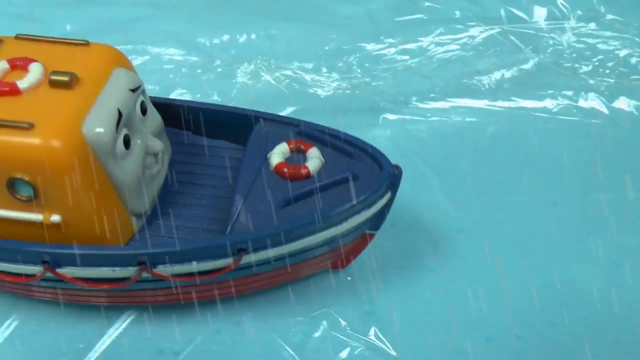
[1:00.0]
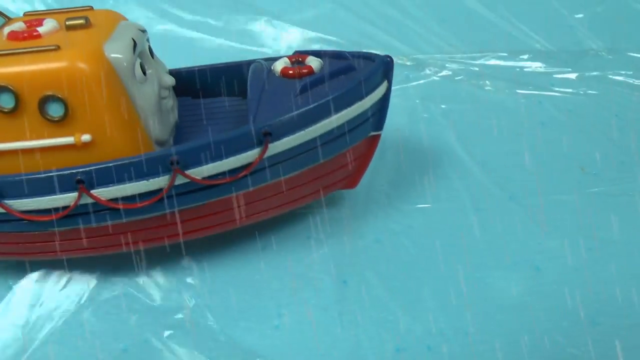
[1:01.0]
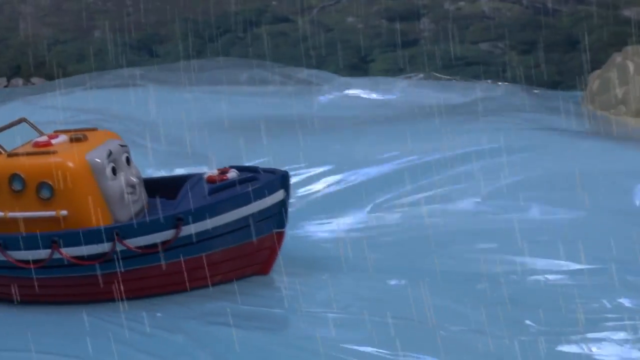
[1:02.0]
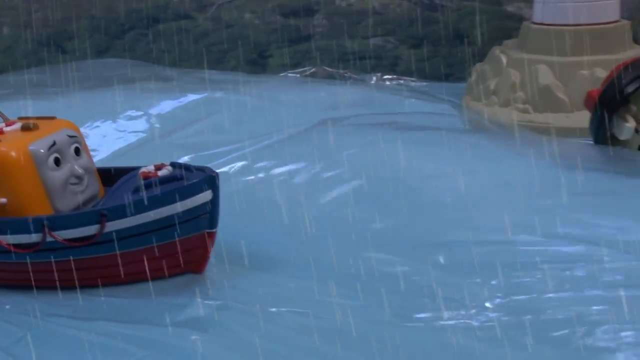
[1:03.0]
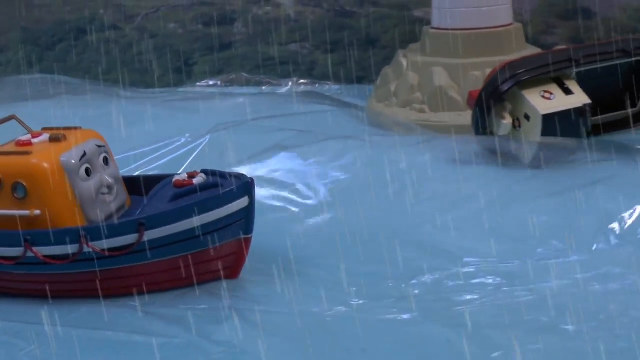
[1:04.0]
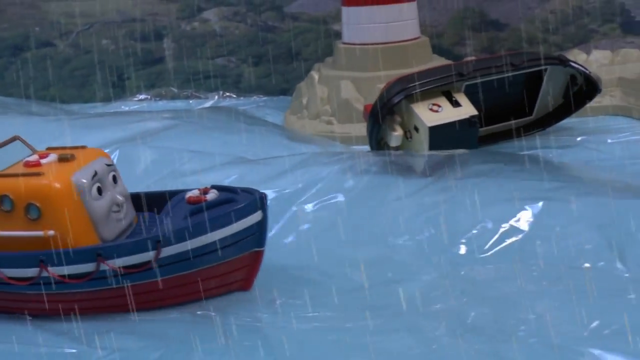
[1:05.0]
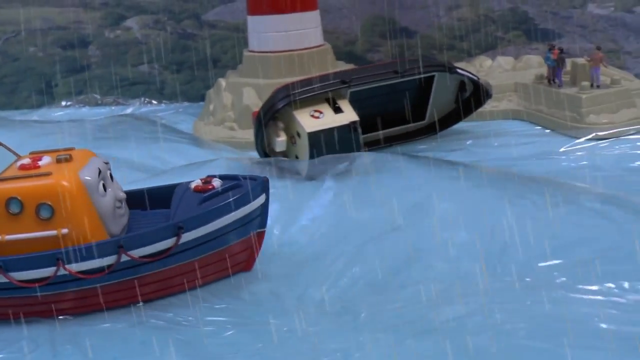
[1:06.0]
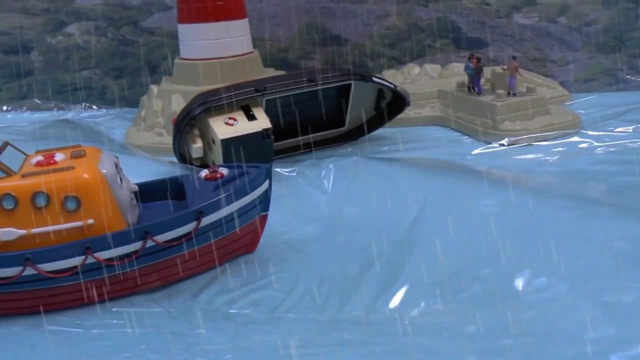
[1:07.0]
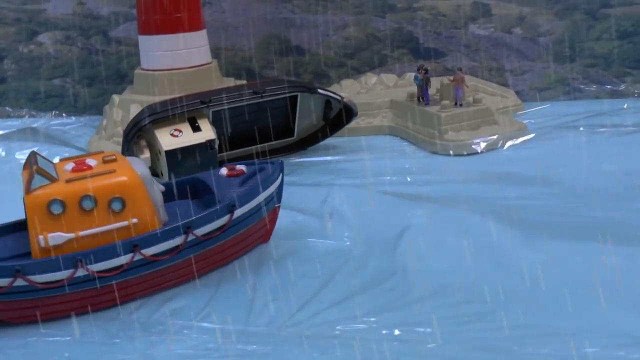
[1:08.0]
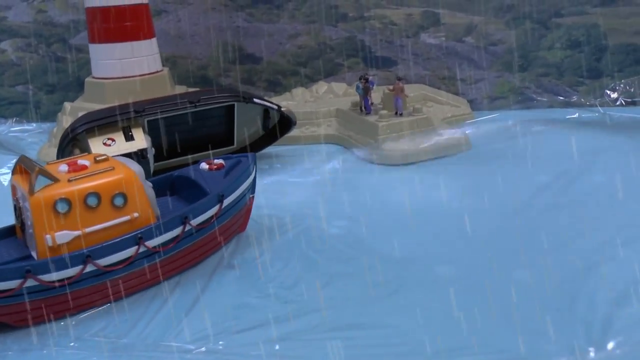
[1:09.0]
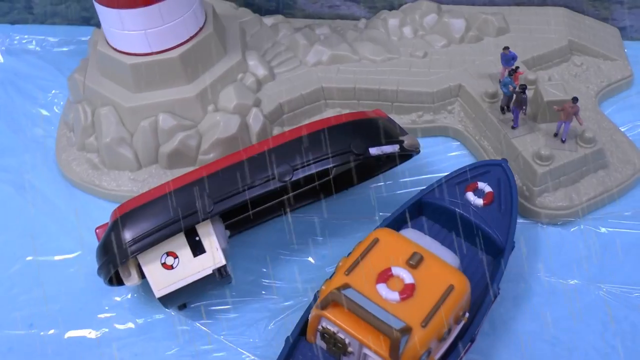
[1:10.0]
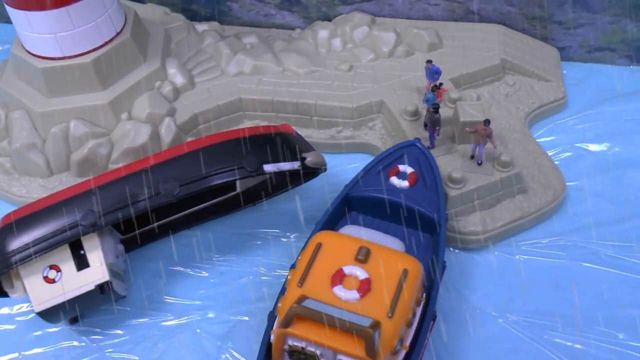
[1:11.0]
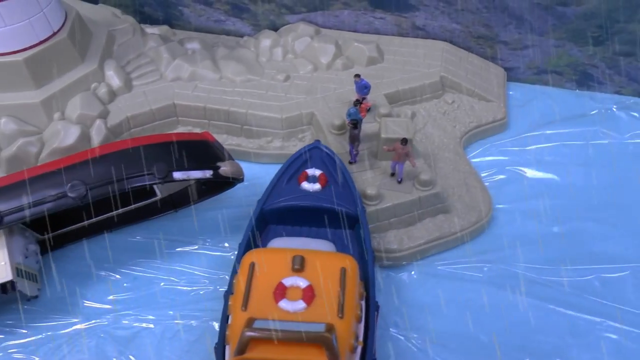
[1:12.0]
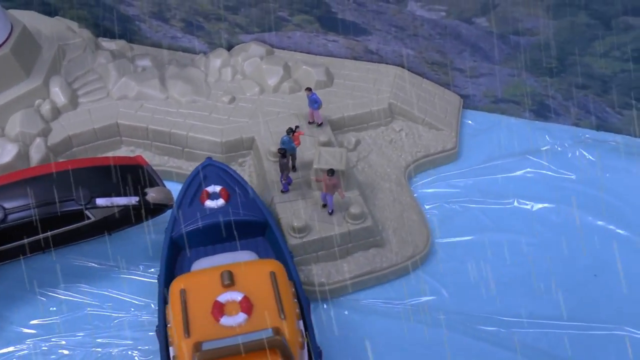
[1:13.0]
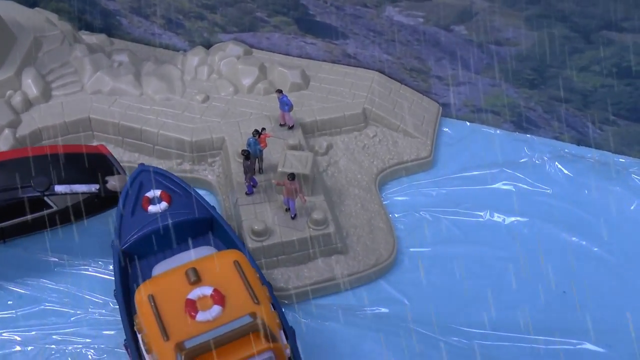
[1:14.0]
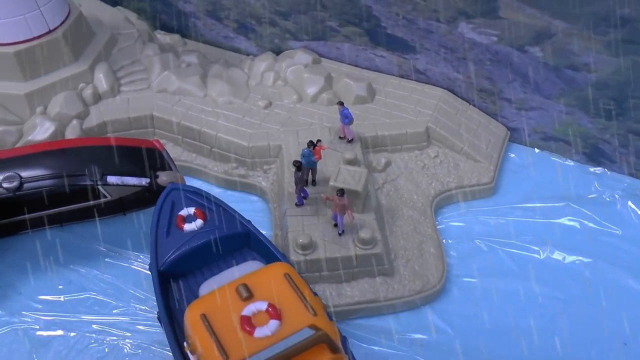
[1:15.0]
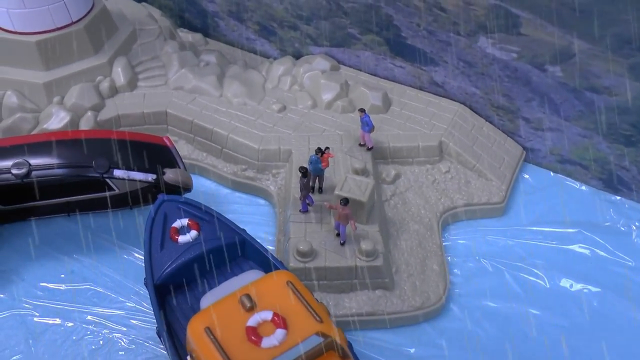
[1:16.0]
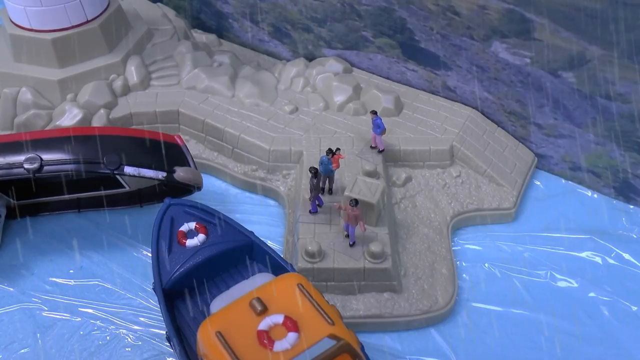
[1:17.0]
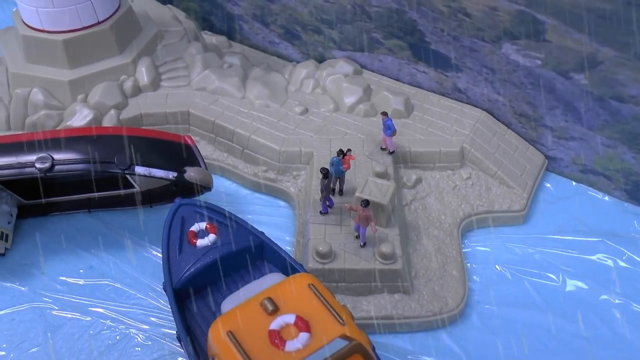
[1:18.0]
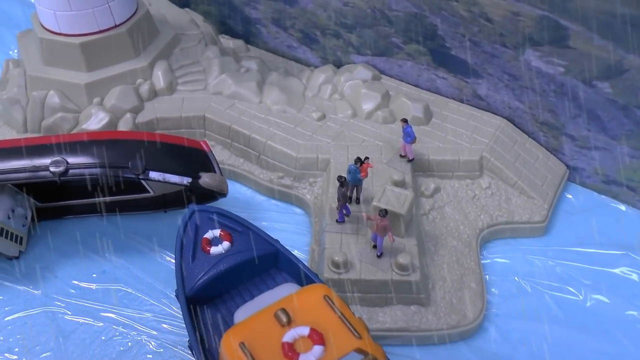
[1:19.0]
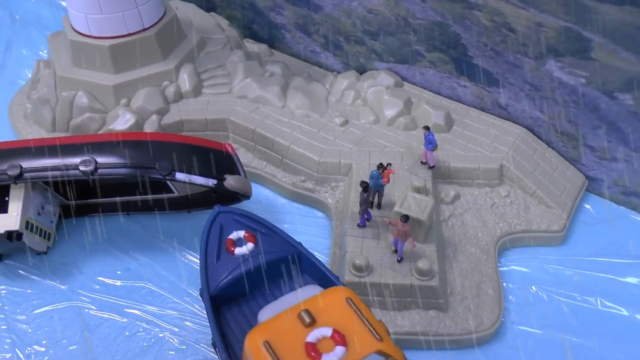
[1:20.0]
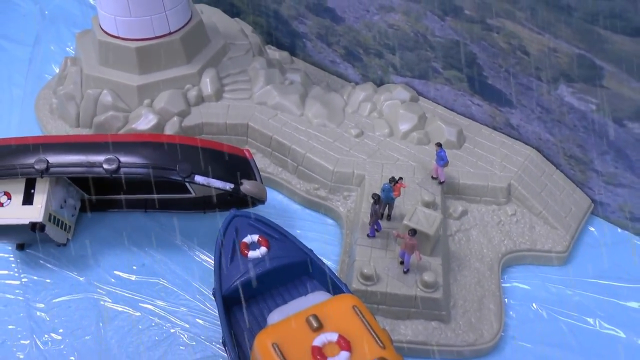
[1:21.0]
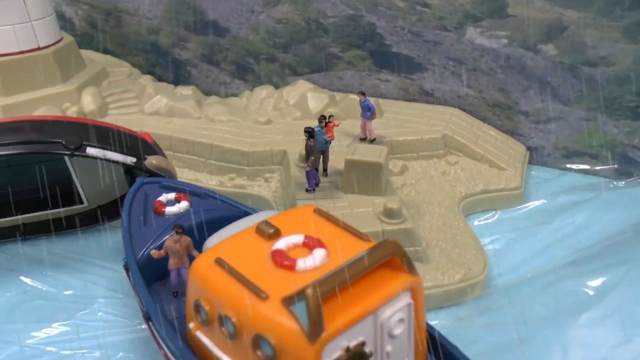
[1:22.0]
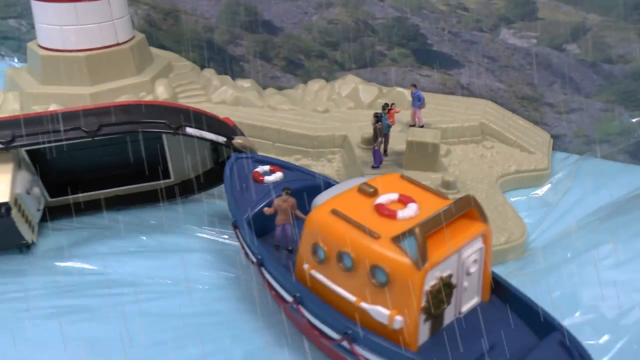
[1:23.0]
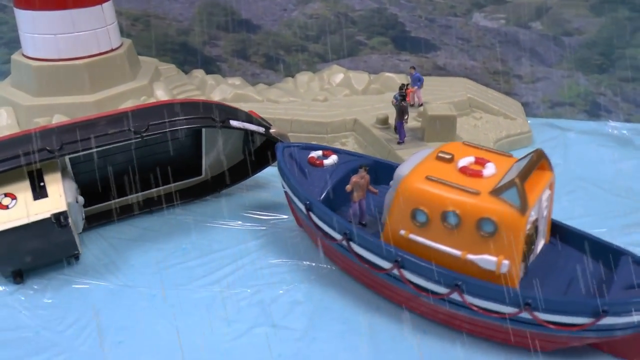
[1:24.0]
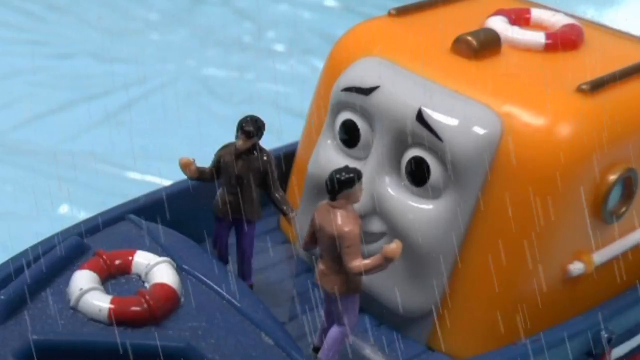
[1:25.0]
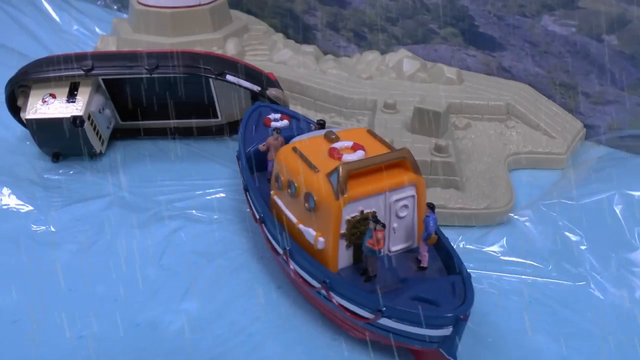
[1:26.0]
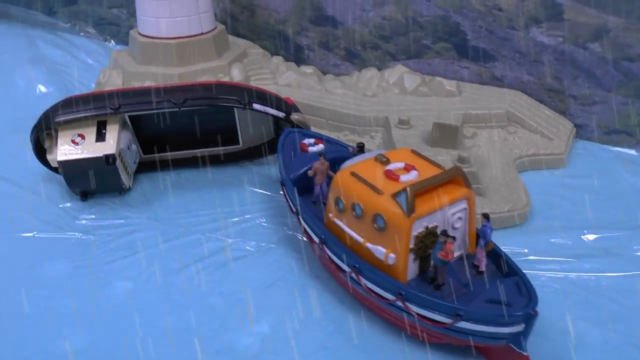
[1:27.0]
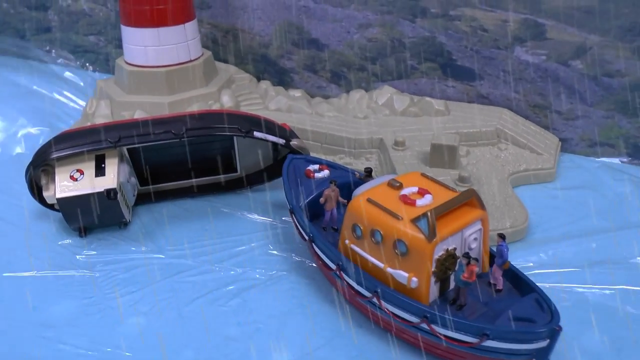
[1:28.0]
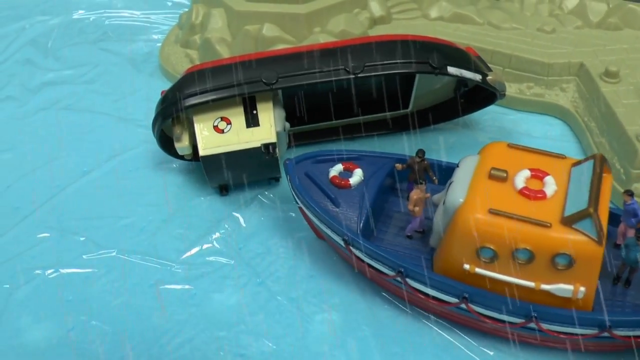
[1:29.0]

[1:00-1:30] The boat is about halfway in from the left side, with the rest of the frame filled by light blue plastic meant to be water, which is kind of ripply. At the front of the boat, on top of the yellow train engine, is a red and white floating device with two red and two white sections, and there is another one on top of it too. The engine has a worried look, its face turned to the right. A slightly wider shot shows it getting closer to the capsized boat across the bottom, then turning up to the right toward it as the plastic keeps waving and heavy rain falls. Seen straight down from above, it pulls up to the land in front of the people standing just down to the right of the capsized boat. Its back end swings around to the right as some of the people move back a little to get away, since they are at the edge. Its point pushes on the black and red boat, moving it a little, then it backs up a little and lingers there. The camera shakes a little. In a closeup, a person is in the boat next to the train engine while the others stand around, and the camera pans to the left. Two people are now in front of the train, which has a worried look on its face. After a closeup of the engine, a wider shot shows three people at the back where the cabin is, which is white with a door. The view then goes around to the cabin of the capsized boat, with the point of the rescue boat touching it.